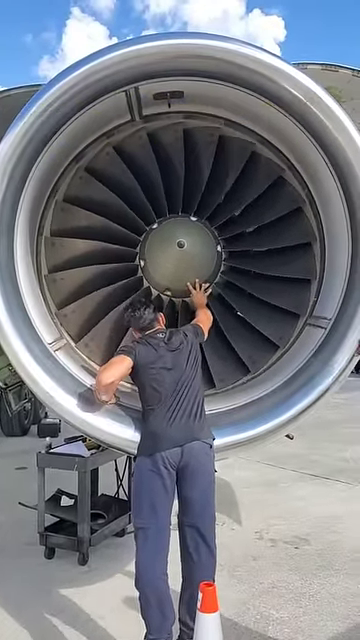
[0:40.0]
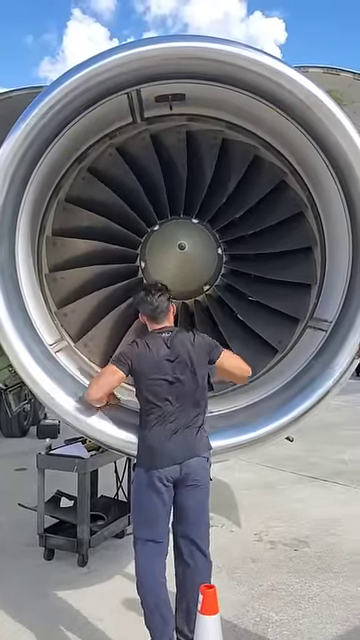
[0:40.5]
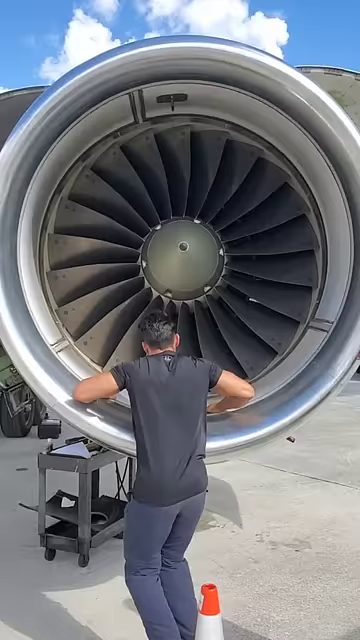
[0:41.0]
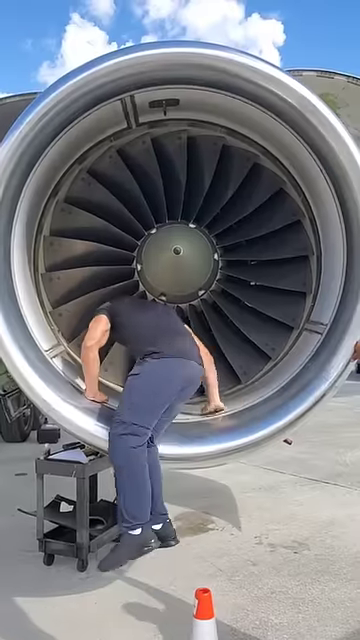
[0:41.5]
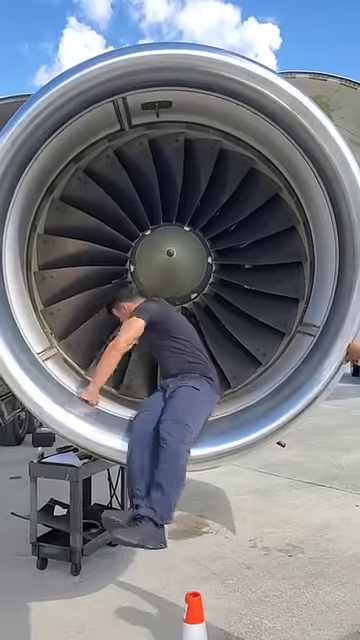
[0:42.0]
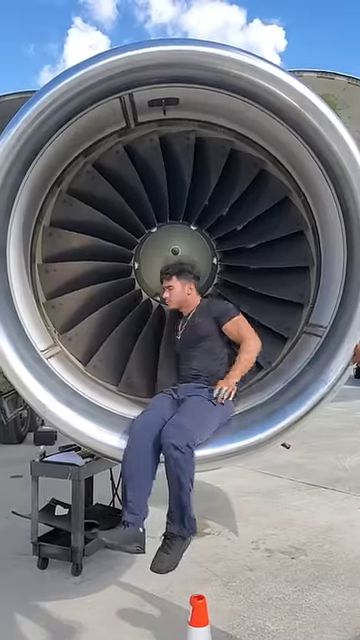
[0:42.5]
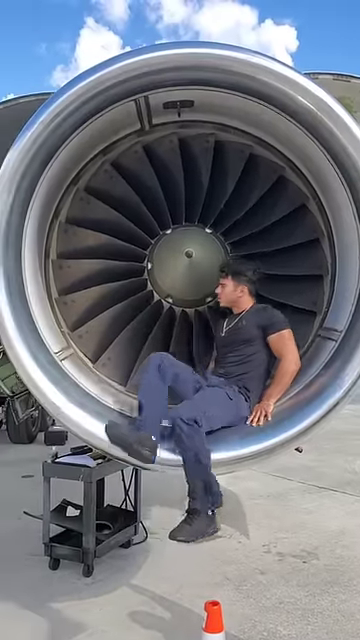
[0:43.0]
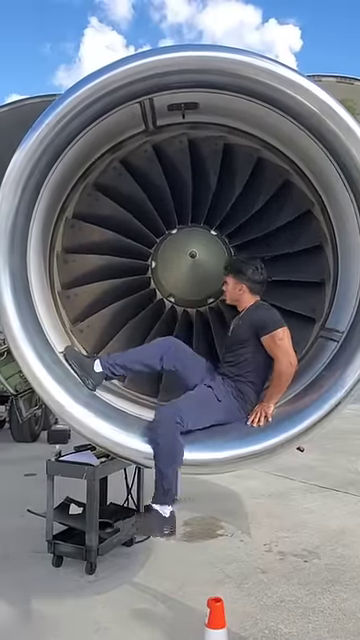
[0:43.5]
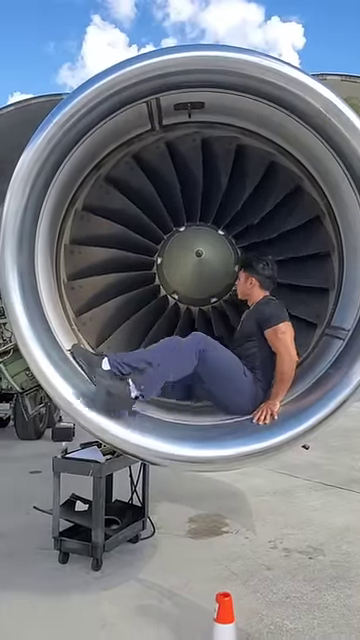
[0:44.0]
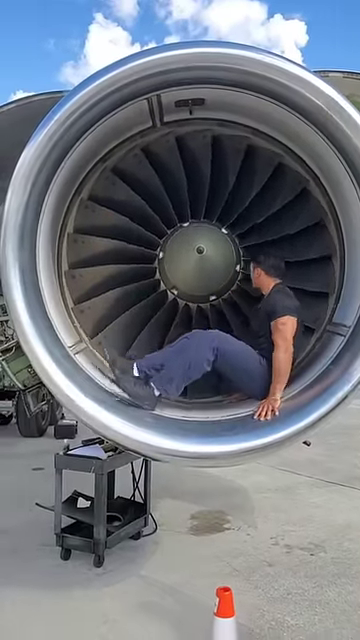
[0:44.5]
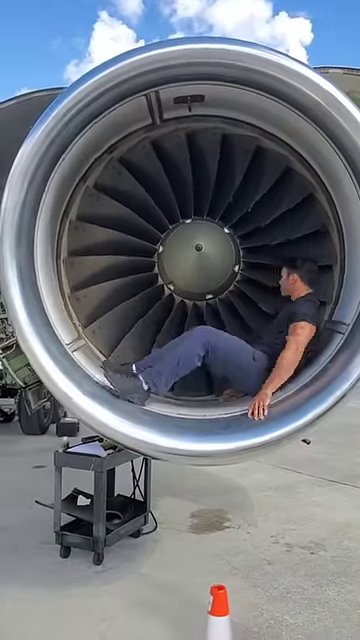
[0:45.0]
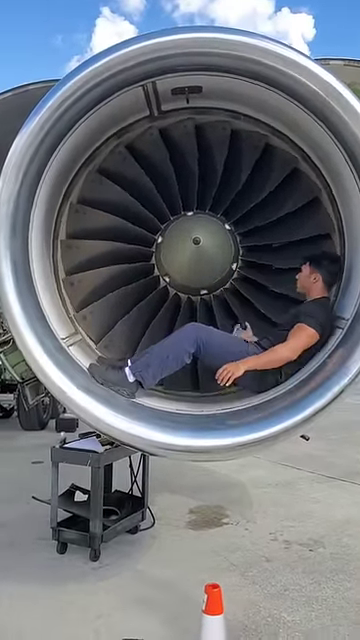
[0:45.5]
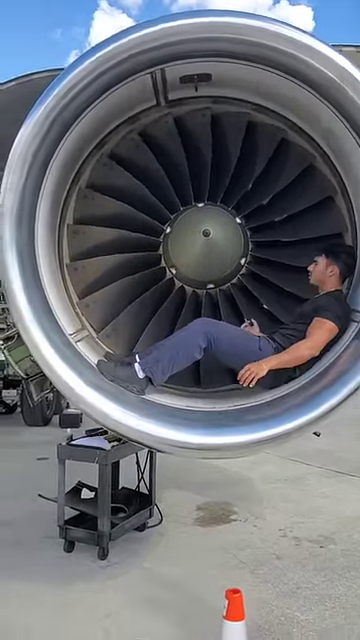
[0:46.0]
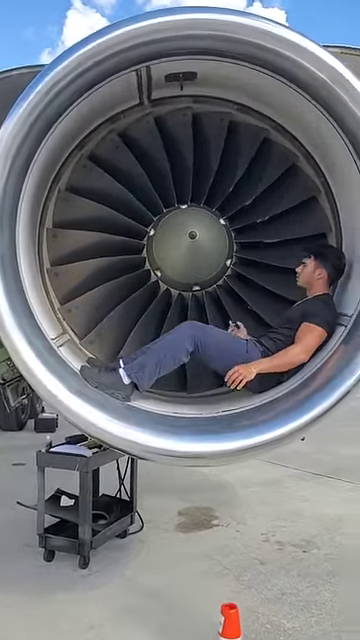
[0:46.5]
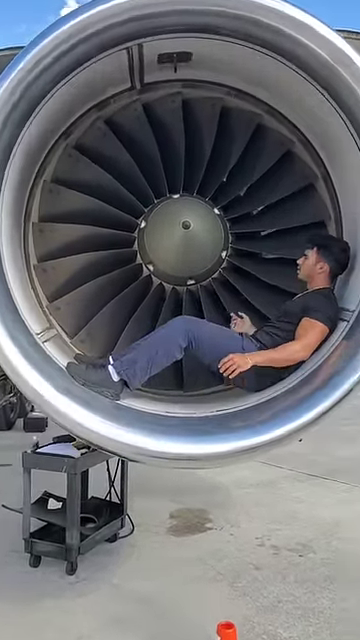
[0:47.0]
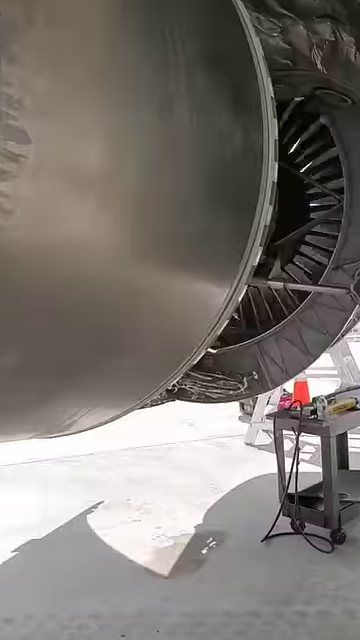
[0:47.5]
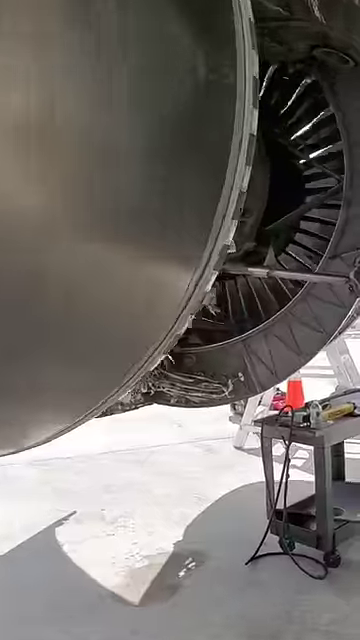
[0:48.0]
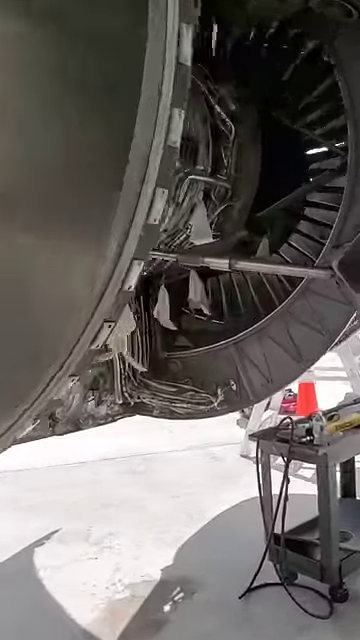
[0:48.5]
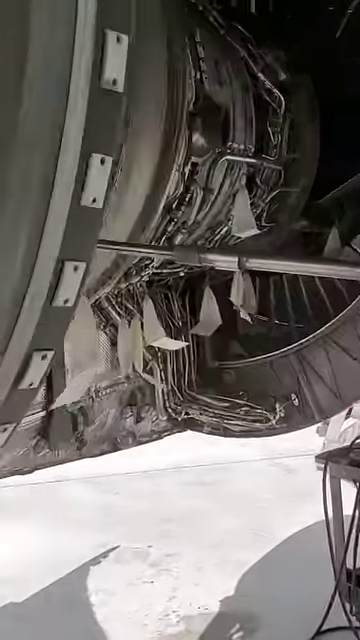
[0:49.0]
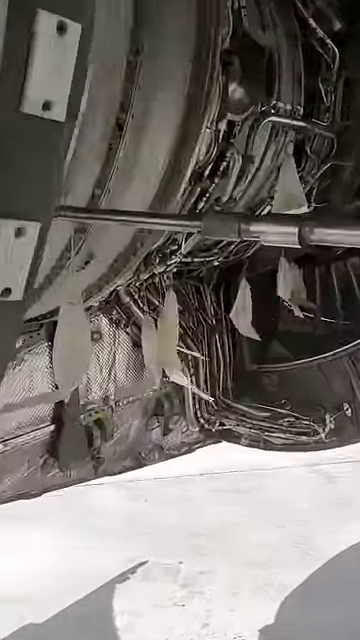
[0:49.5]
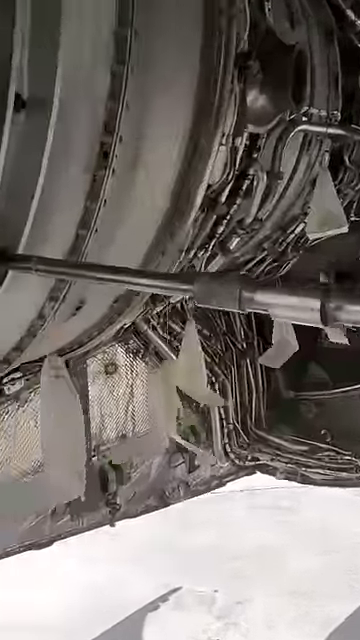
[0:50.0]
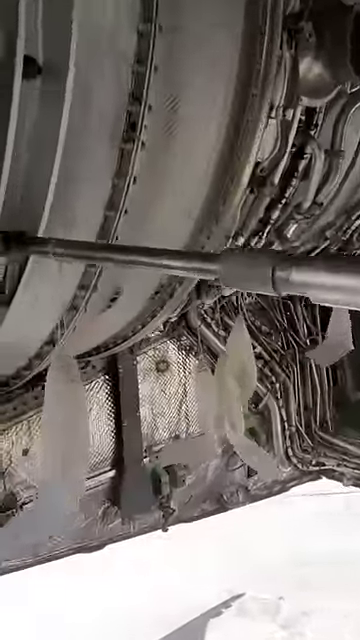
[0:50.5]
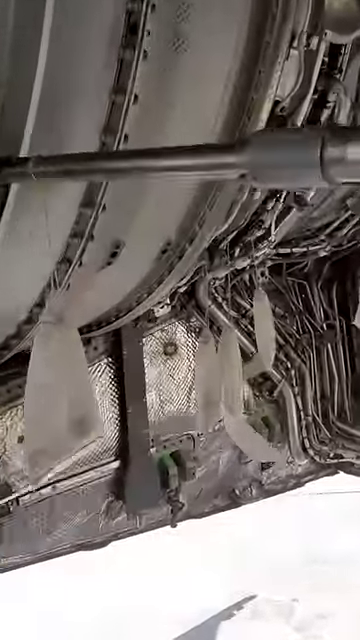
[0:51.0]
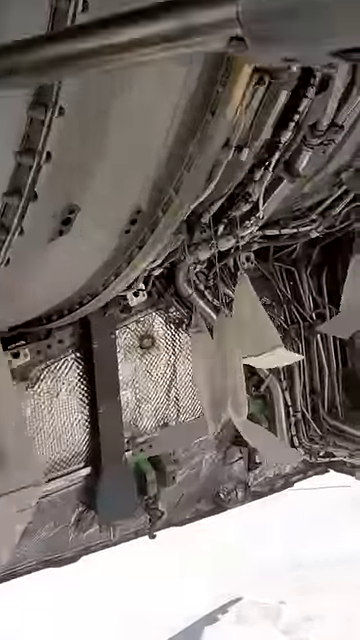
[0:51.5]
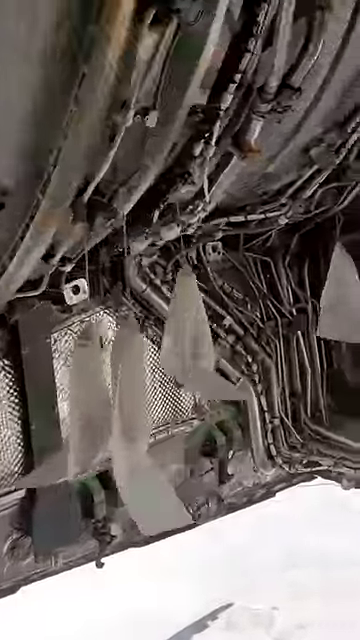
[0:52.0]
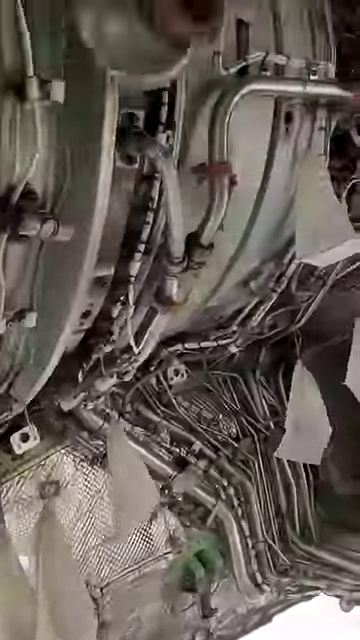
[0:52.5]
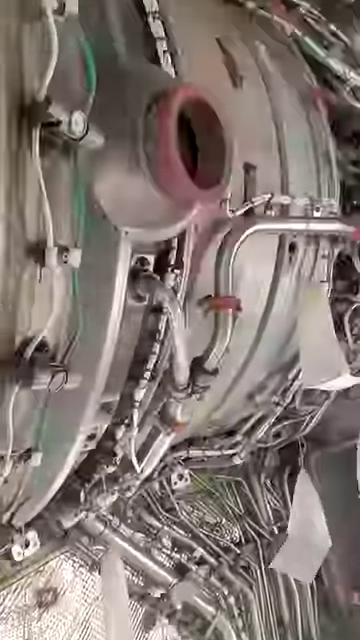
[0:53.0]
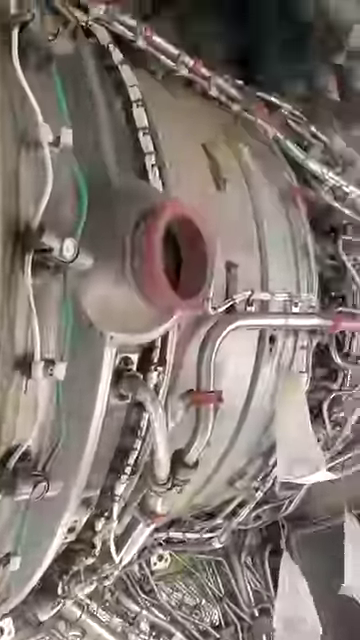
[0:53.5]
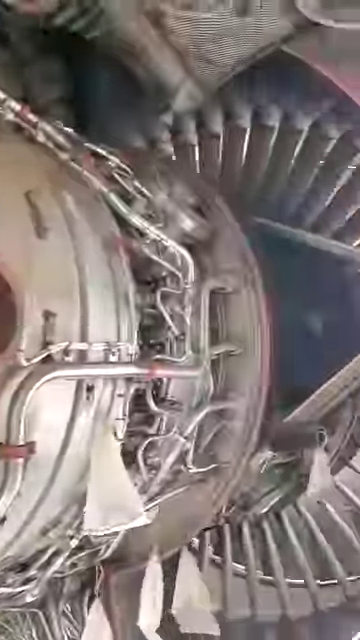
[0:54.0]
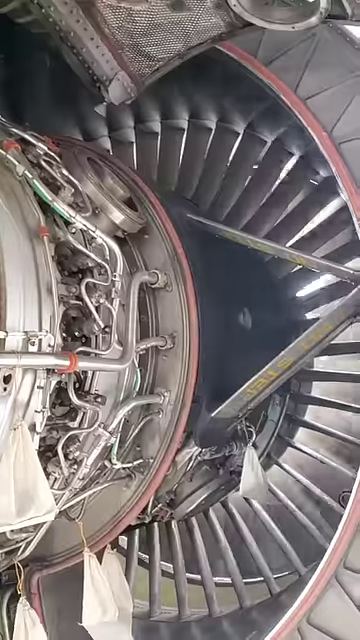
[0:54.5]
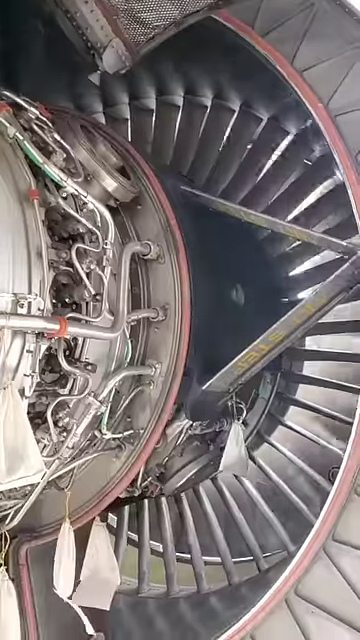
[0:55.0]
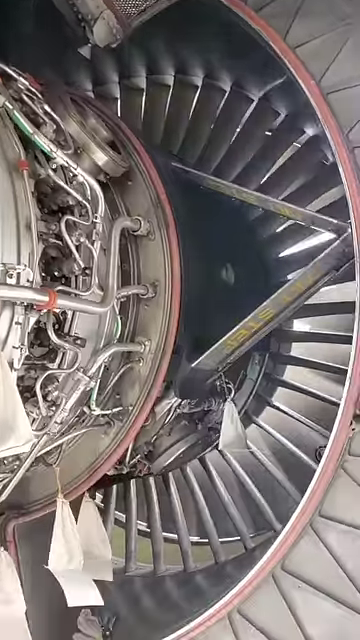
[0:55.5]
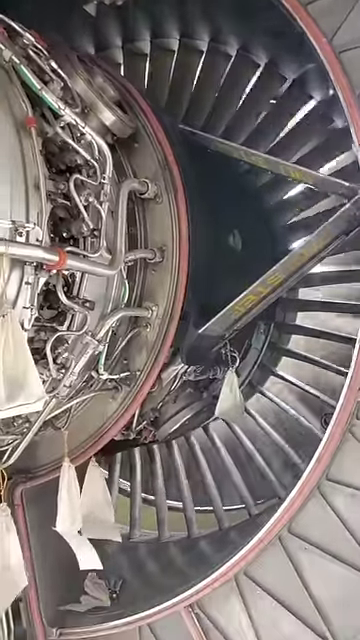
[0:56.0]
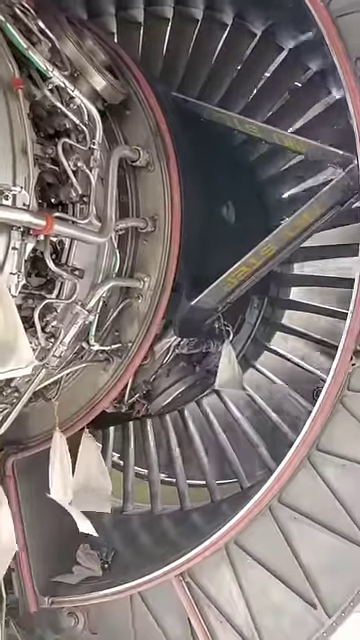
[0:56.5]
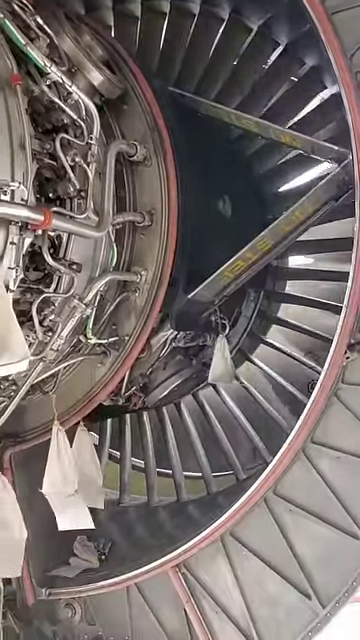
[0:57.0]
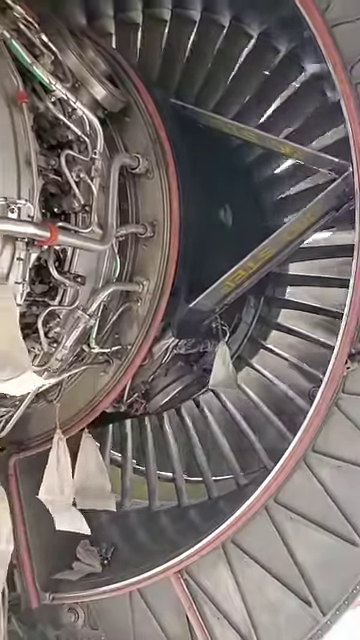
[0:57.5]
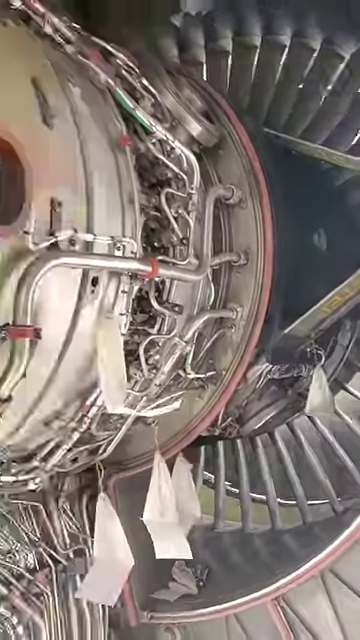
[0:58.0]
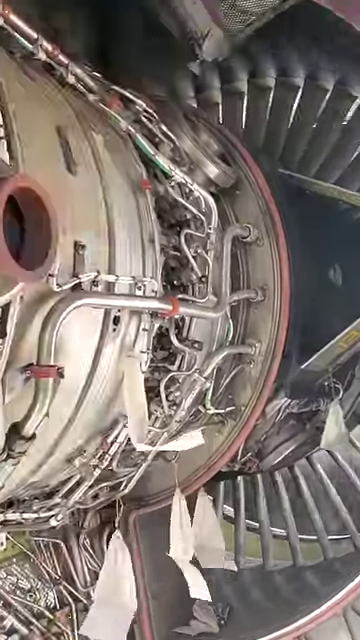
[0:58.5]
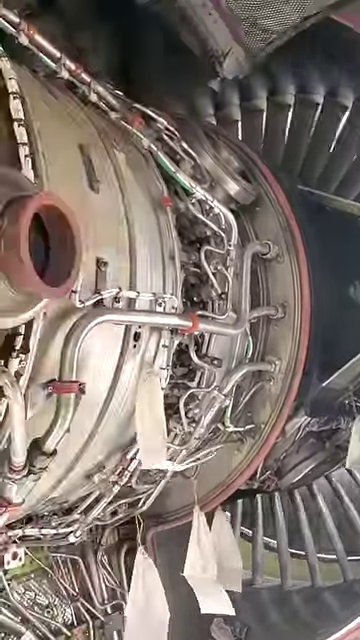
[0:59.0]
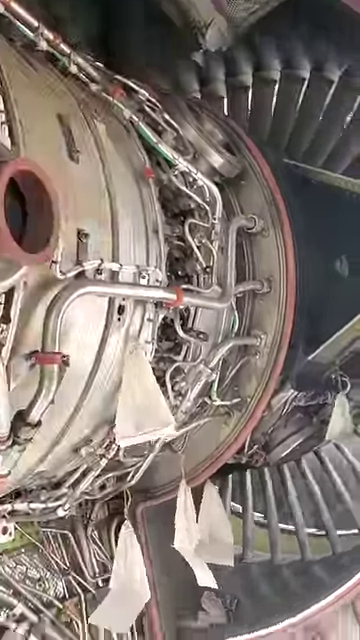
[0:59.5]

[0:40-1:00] The man slows the engine until it stops spinning, then hops on and is kind of laying inside it. He is then sitting inside the engine. Two additional videos pop up in front of the image of the spinning engine: the first reads "one day as an airline technician in 2023" and is 27 minutes and 39 seconds long; the second, underneath it, reads "aviation fishing size matters" and shows an image of a plane.